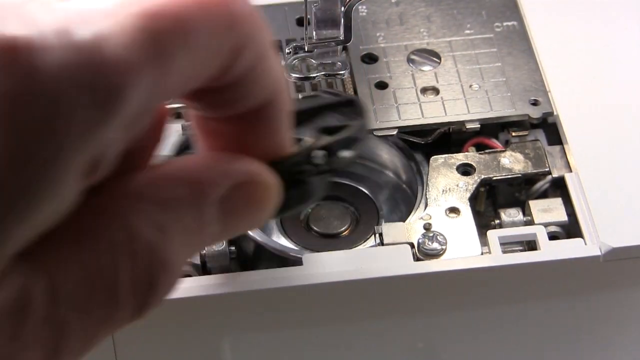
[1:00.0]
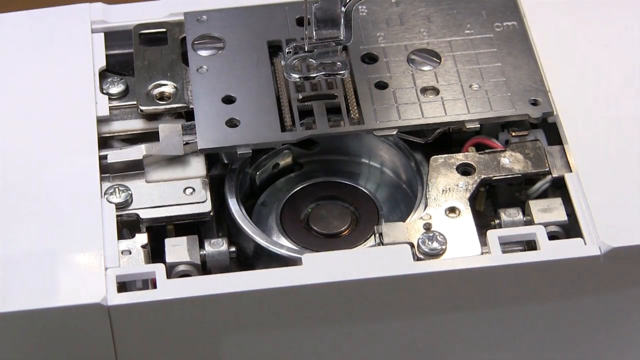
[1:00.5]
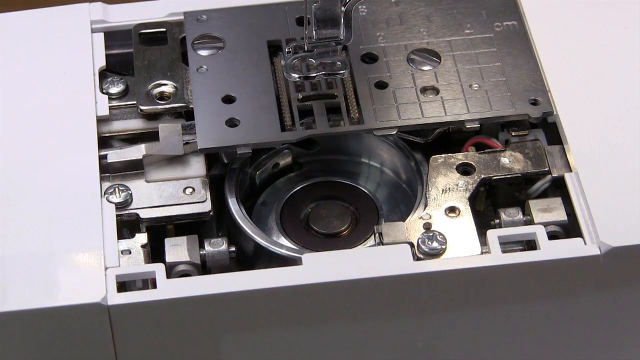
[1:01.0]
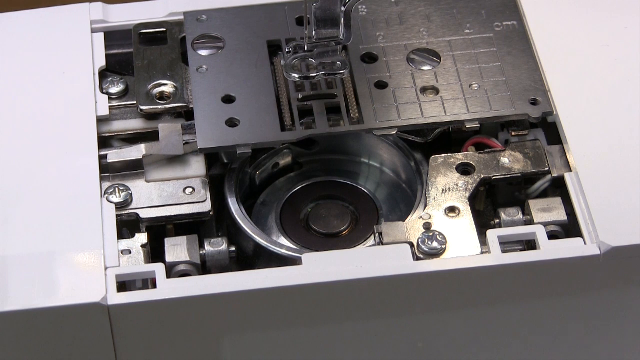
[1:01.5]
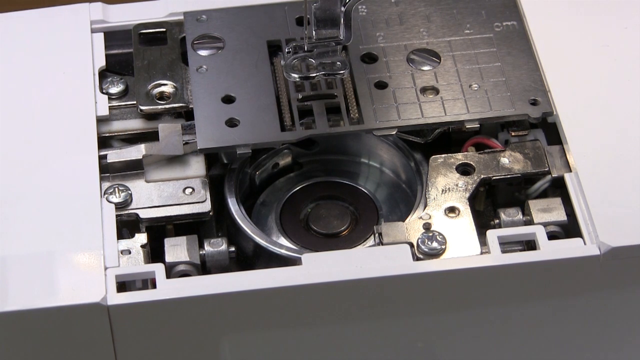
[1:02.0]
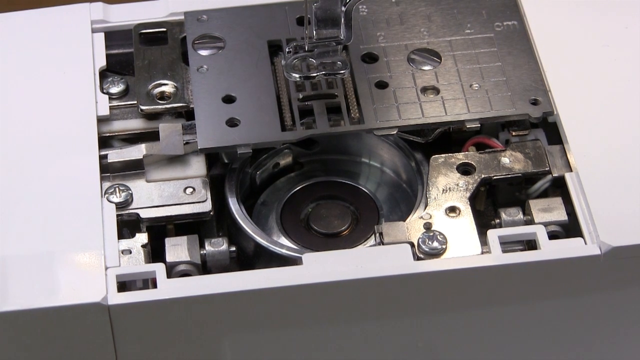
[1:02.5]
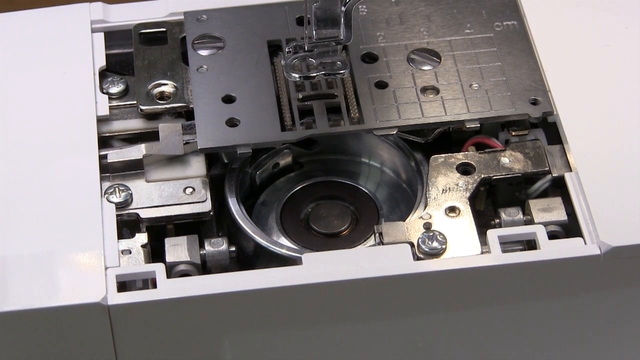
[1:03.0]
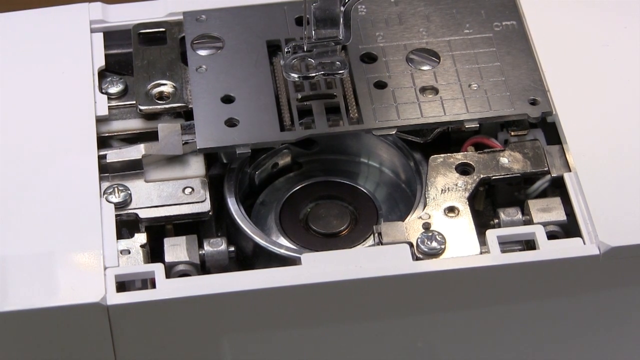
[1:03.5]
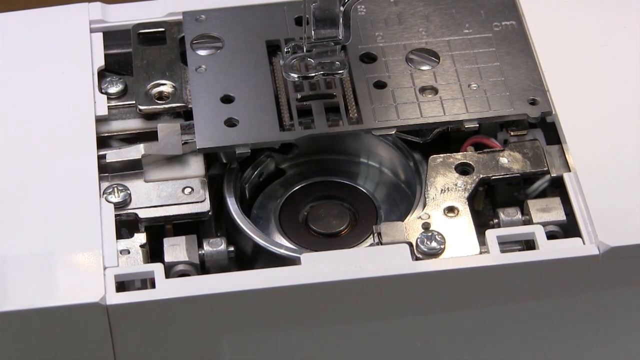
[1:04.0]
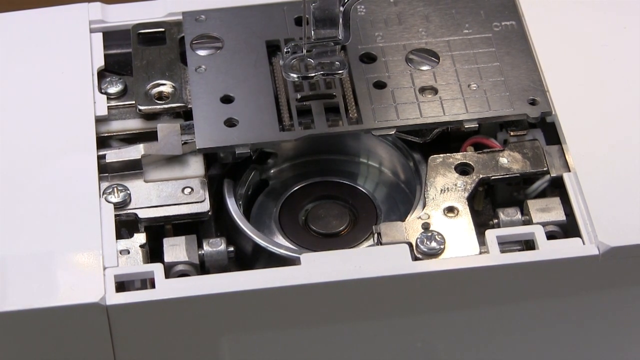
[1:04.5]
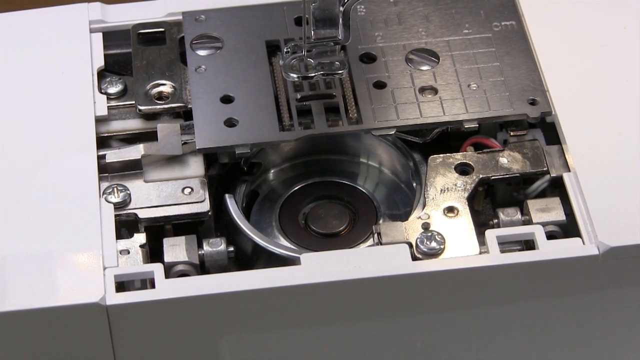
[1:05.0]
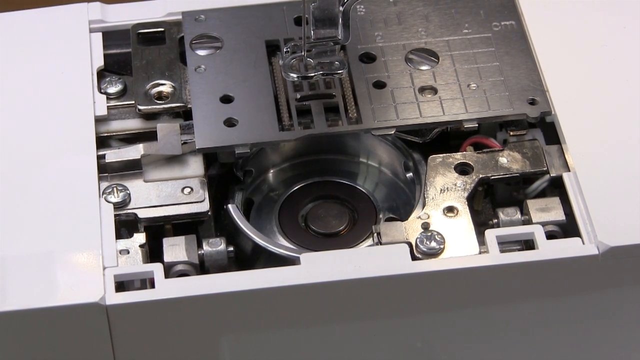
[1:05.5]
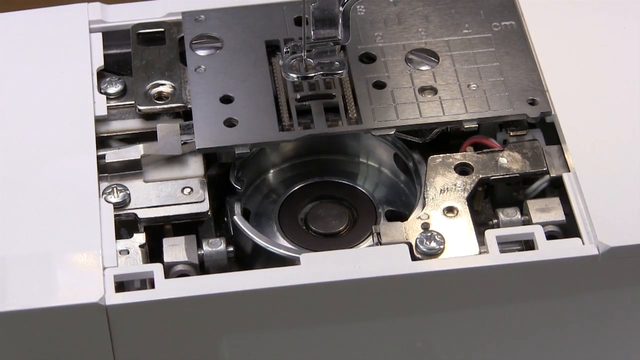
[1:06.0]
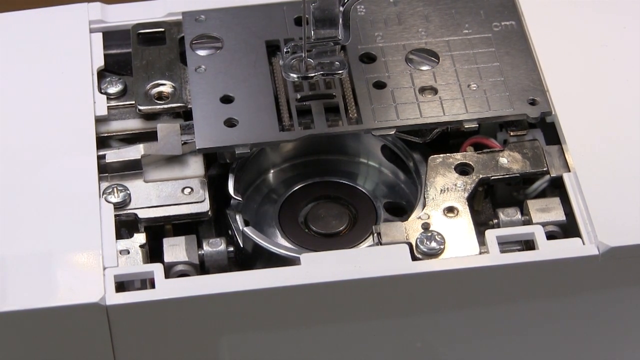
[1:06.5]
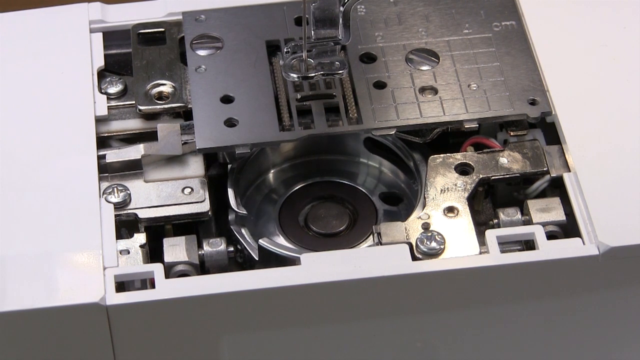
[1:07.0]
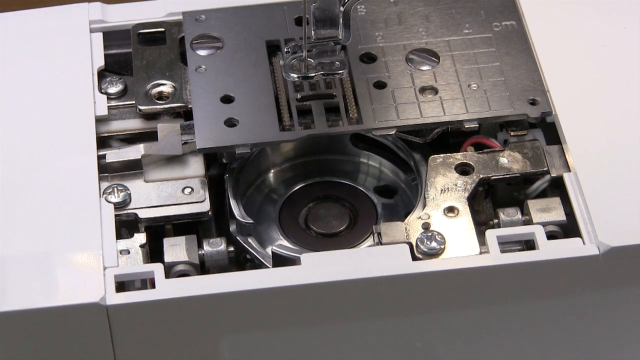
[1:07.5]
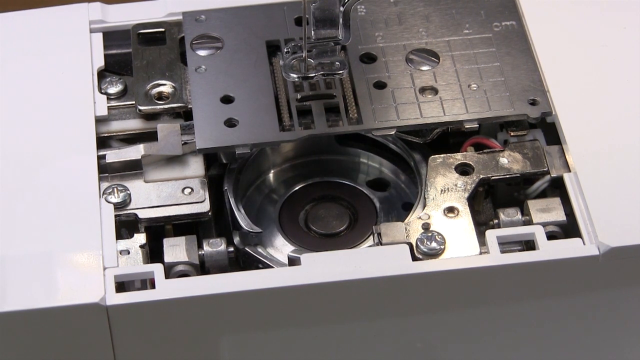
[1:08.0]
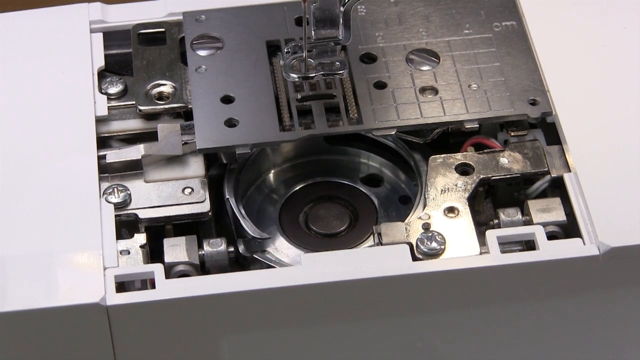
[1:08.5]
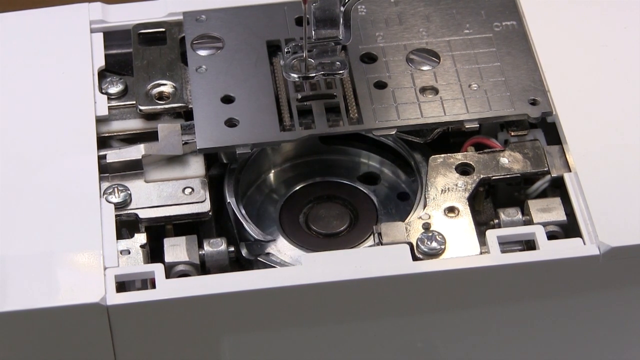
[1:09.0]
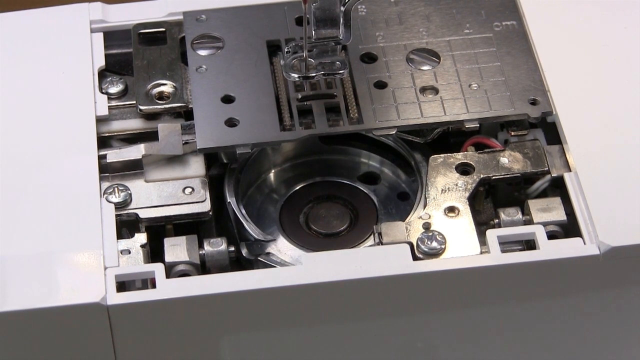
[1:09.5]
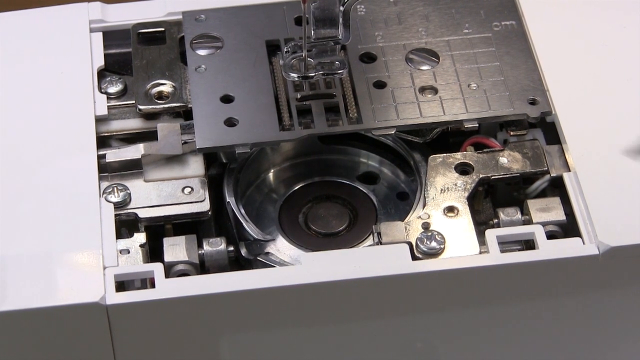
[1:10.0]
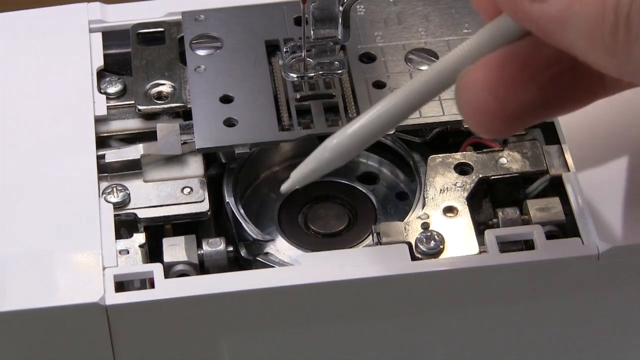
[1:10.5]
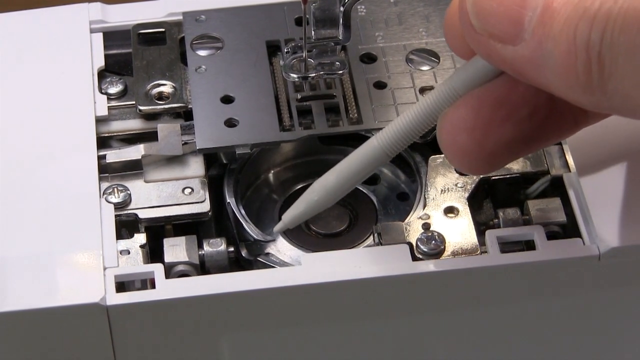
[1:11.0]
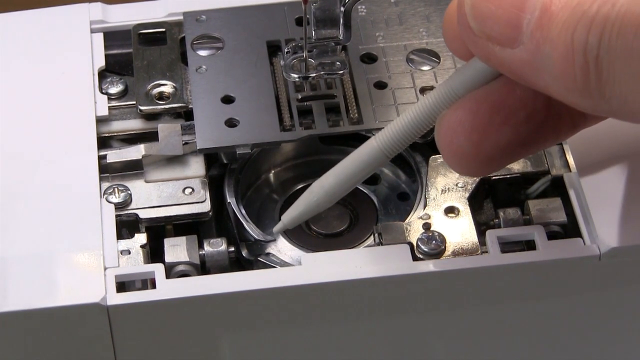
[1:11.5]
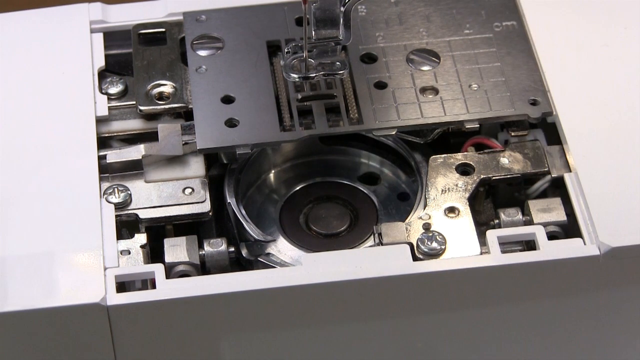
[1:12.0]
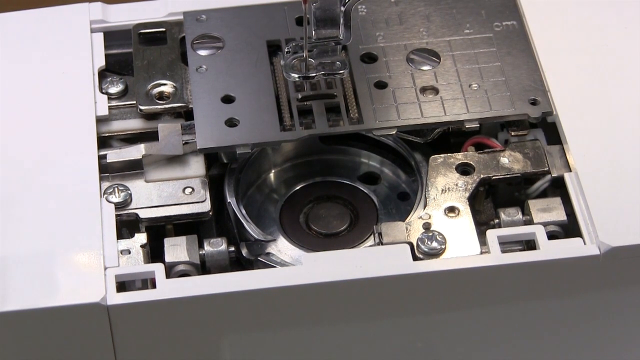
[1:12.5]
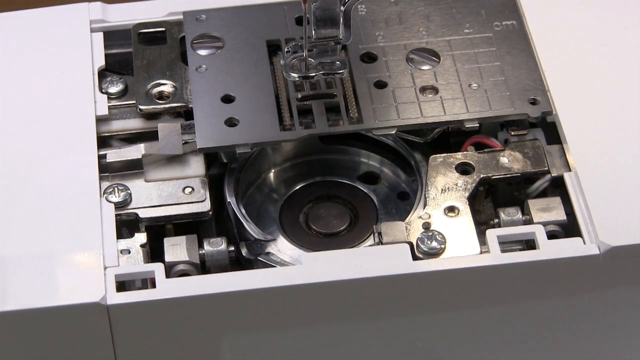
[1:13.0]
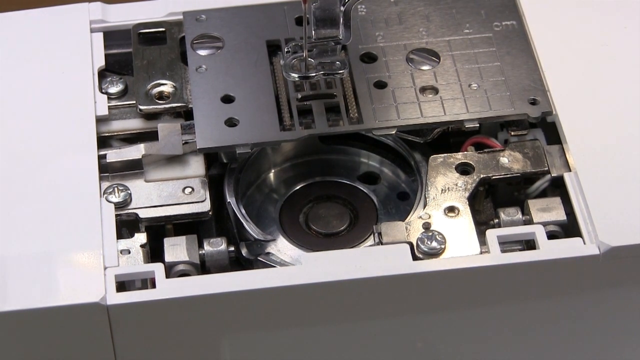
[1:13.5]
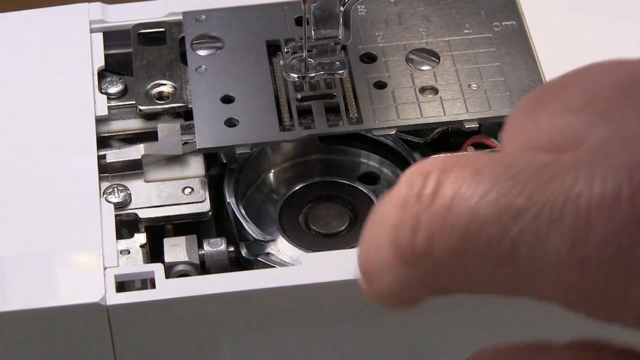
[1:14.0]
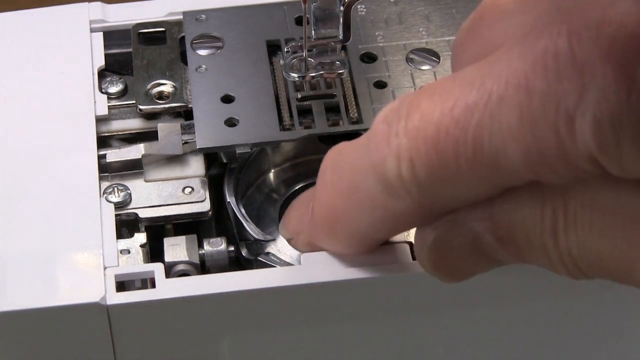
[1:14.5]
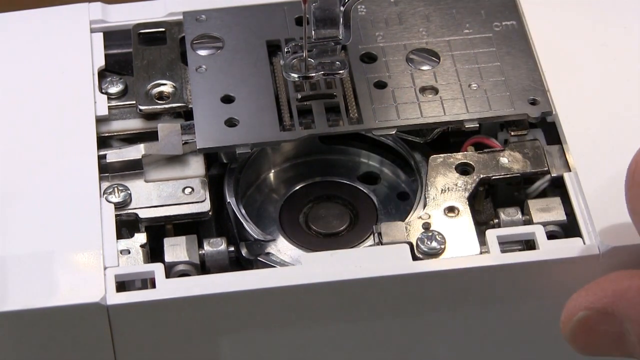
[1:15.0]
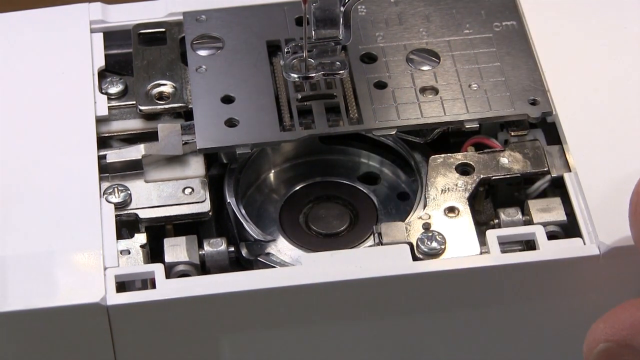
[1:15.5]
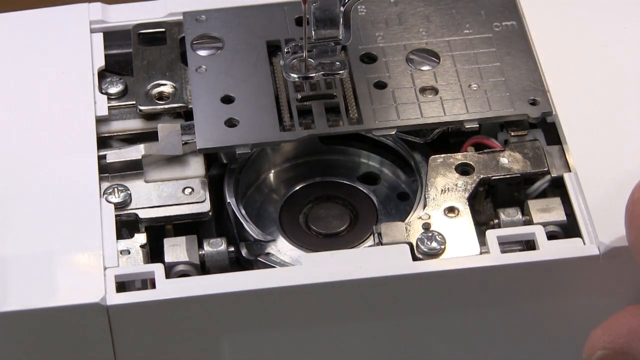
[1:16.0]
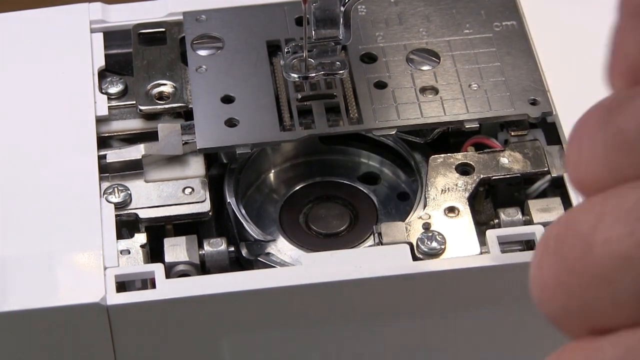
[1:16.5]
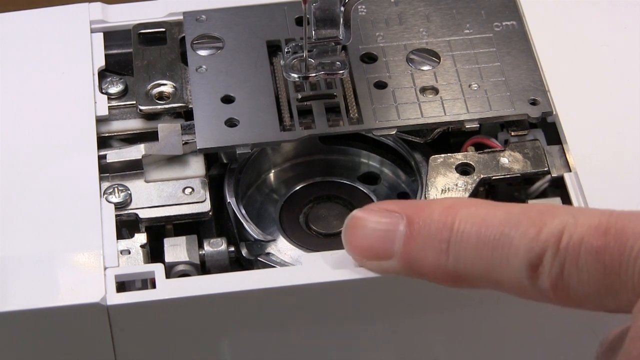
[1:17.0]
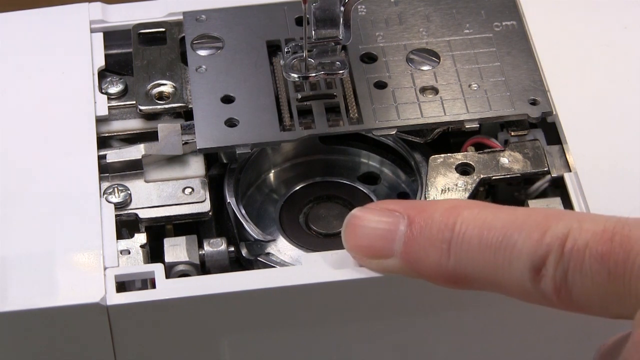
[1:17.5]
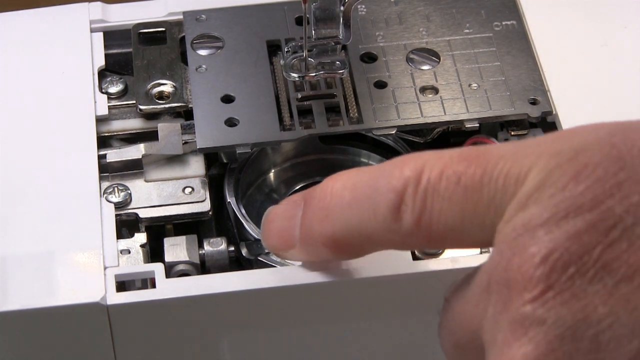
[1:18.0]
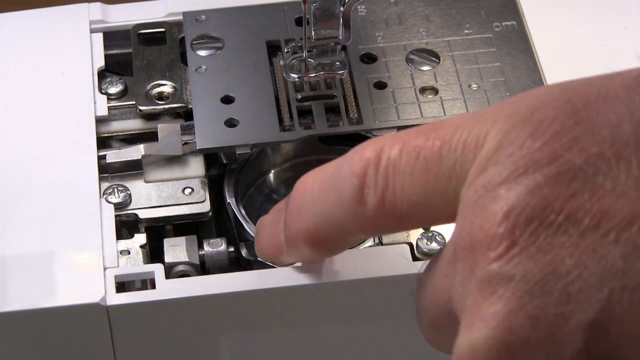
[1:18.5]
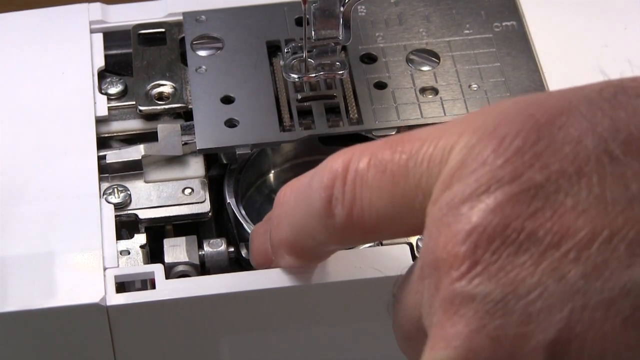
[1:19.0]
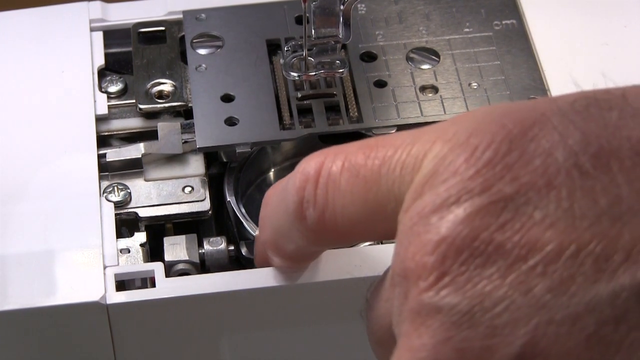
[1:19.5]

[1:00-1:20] There is a clear view of the disassembled bobbin area of the sewing machine, with the top part where the needle goes through the hole and the metal plate still visible. The disassembled bobbin starts turning, and the man's right hand comes back in with the pencil. He points into the bobbin system first with one finger and then with another. The work station is very clean: the sewing machine is in perfect condition, very white and clean, and the metal parts are clean and almost shiny, with no dust or rusted pieces visible.